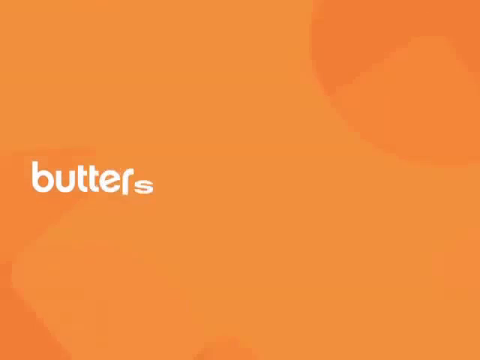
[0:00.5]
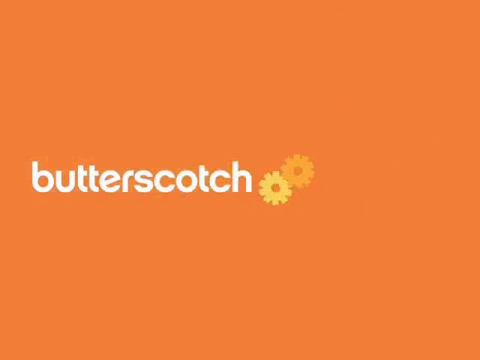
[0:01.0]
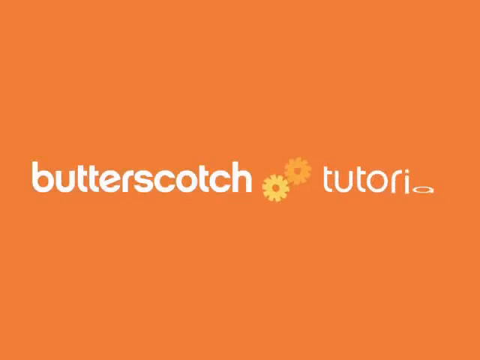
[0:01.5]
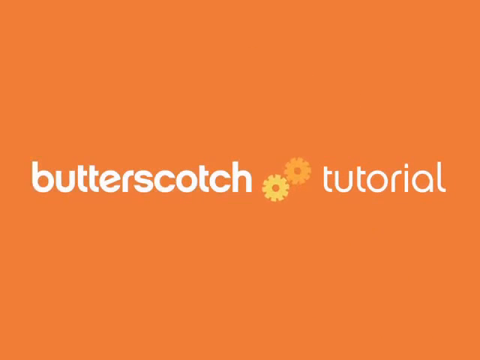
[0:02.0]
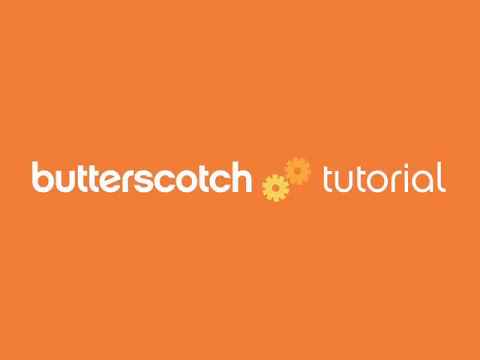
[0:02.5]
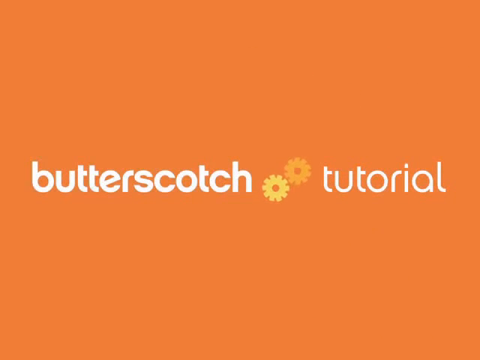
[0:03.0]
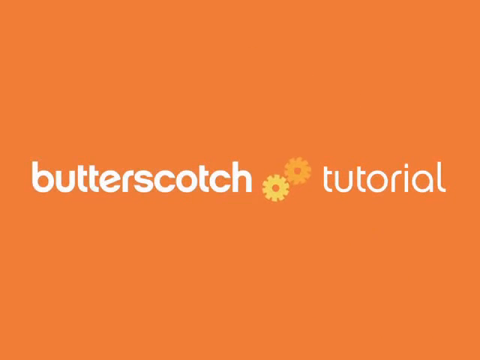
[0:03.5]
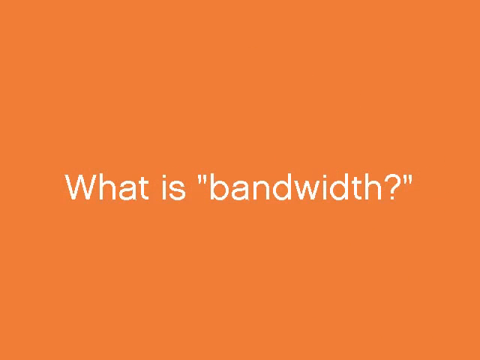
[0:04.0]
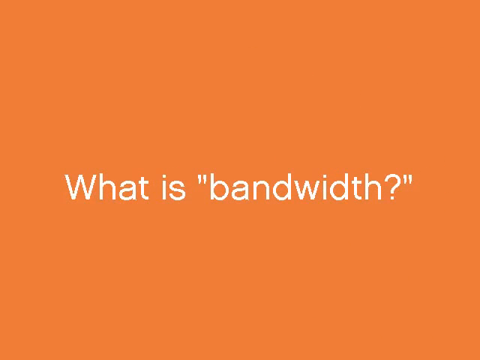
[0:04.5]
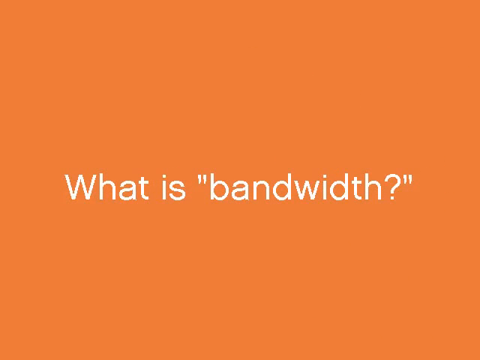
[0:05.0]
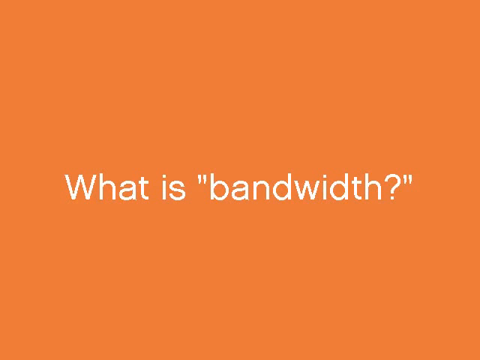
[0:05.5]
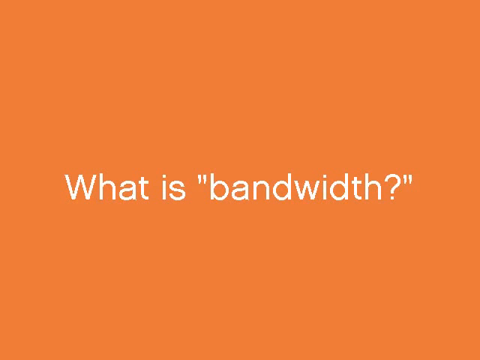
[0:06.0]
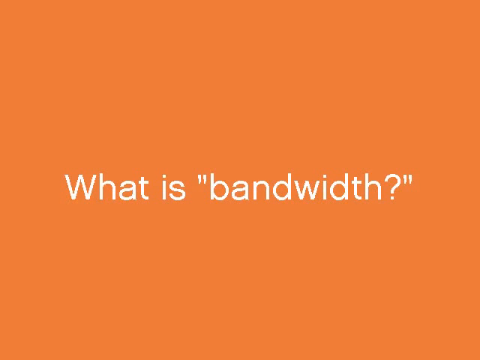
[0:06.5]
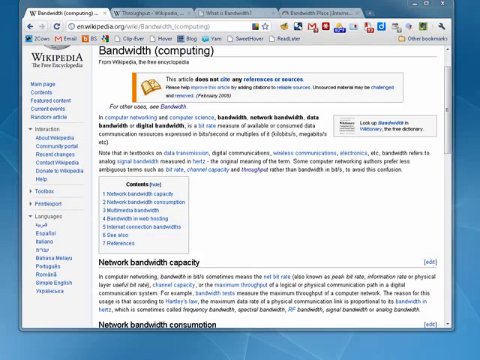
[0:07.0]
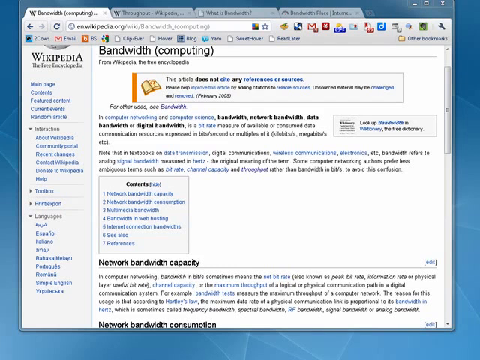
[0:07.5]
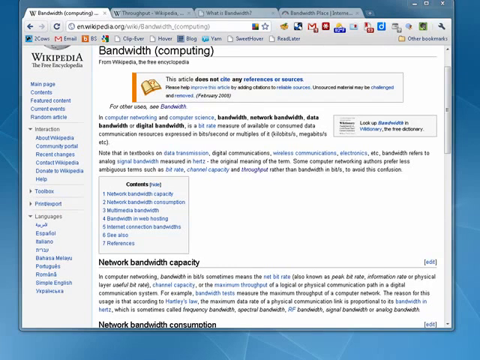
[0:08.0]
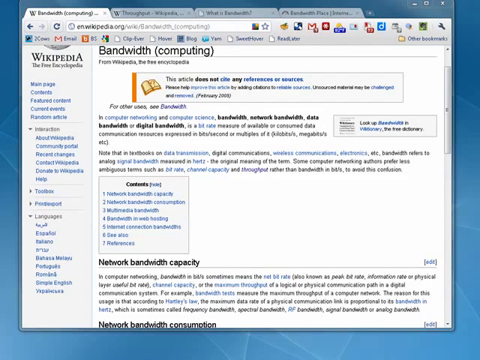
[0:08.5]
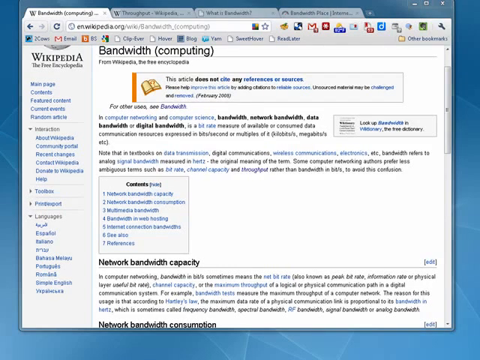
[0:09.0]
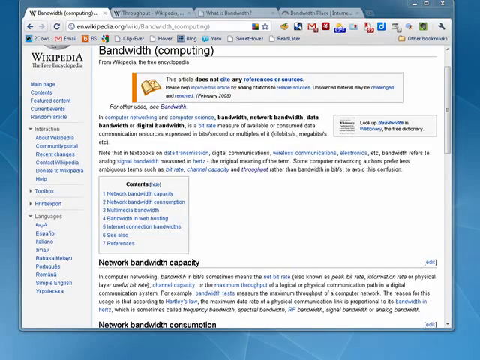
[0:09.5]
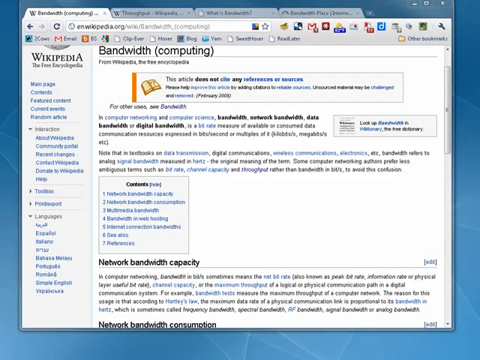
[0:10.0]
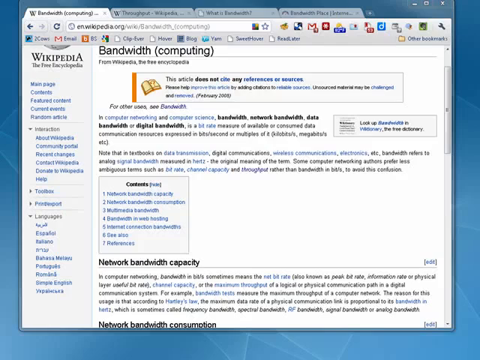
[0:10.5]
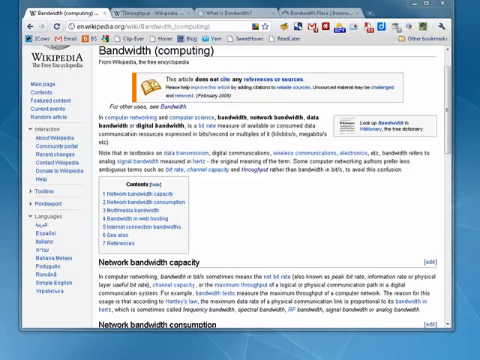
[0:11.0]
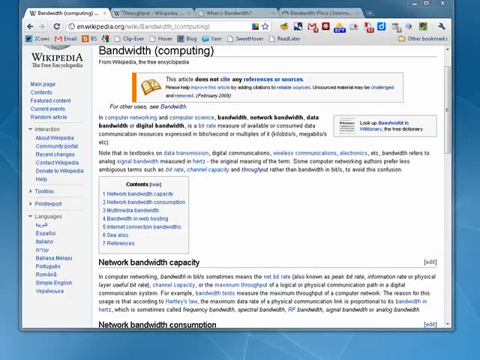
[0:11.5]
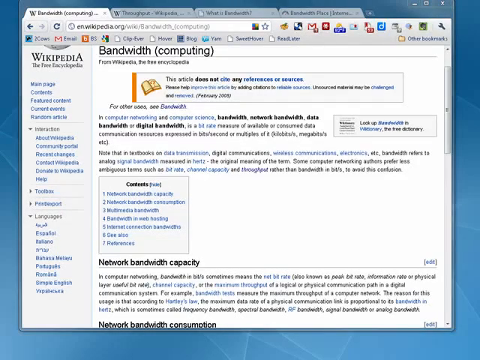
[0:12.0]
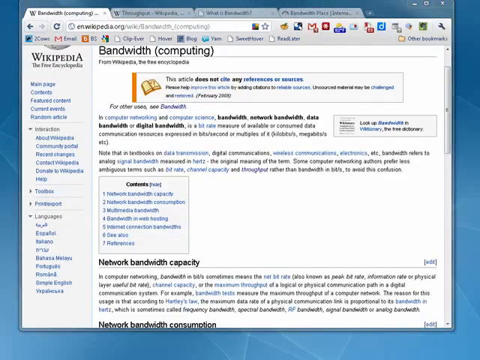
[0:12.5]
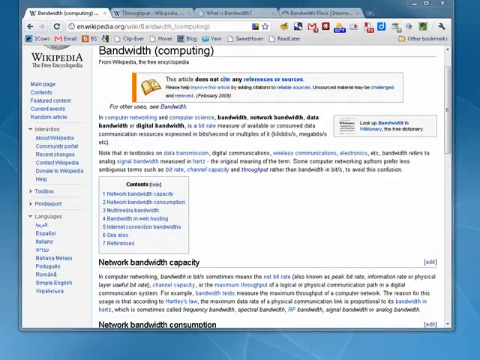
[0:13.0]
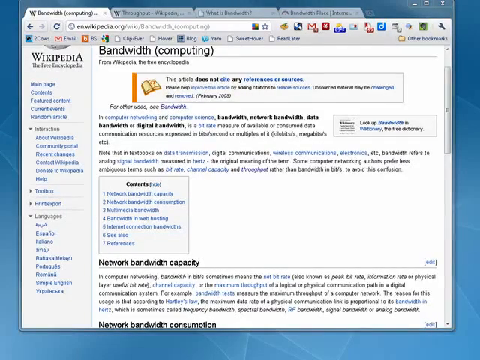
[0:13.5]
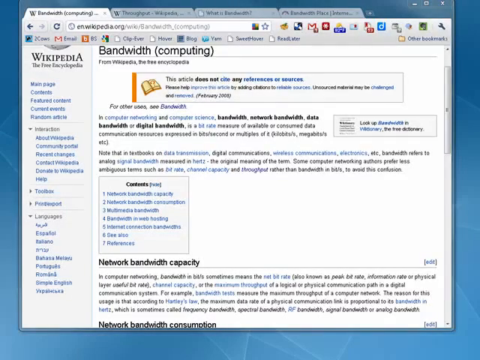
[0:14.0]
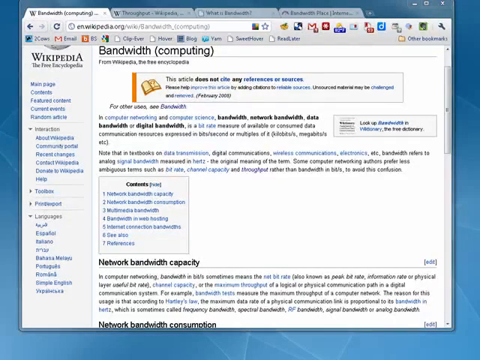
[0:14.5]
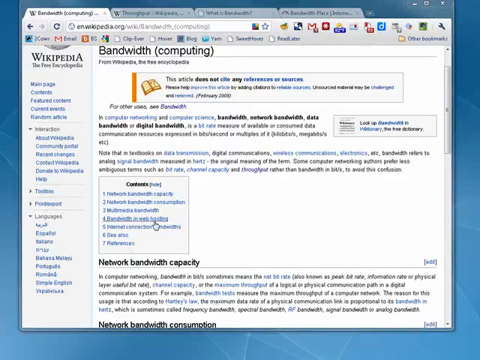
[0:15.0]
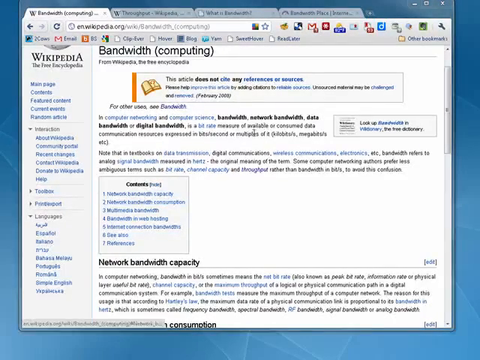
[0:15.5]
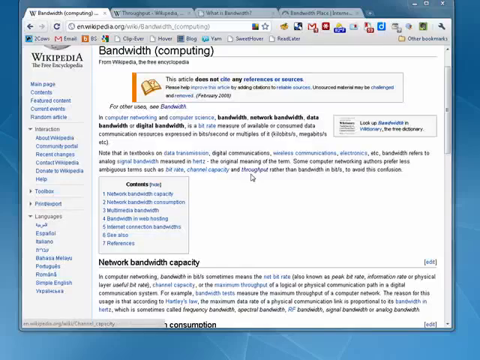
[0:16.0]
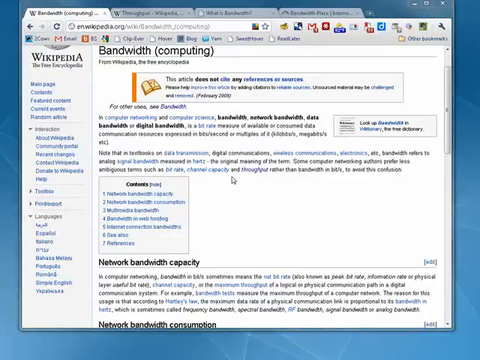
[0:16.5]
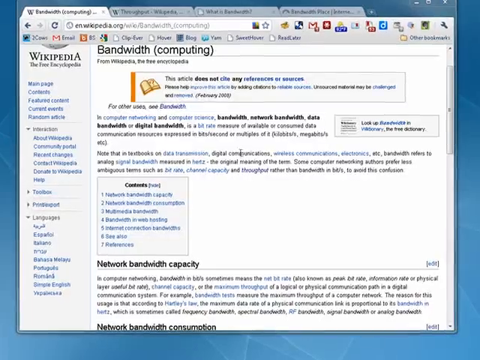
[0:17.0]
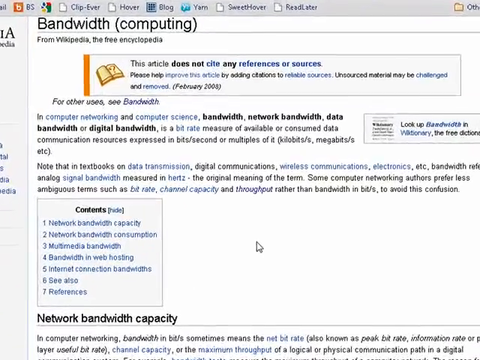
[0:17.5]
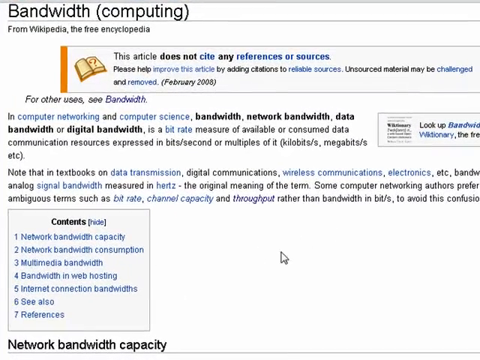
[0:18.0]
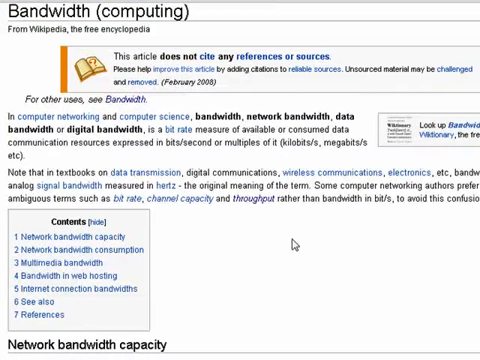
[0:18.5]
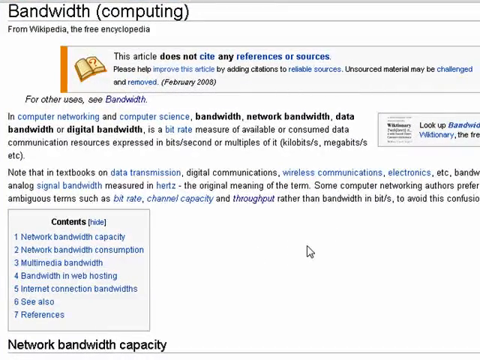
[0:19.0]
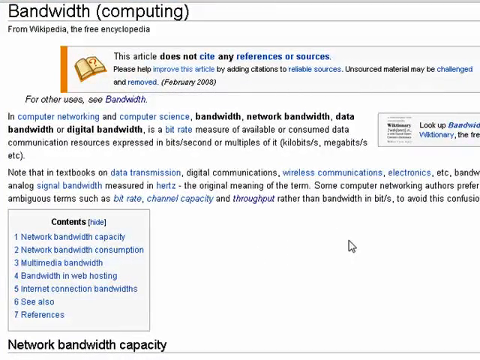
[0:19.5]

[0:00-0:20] The video begins with an all-orange background. Letters come in from the left and the right to spell "butterscotch," and two gears appear: a small yellow one, and up to the right of it a small orange one. Next comes the word "tutorial," and the gear spins slightly. That goes off the screen, and the text "what is bandwidth" appears. The video then cuts to what looks like a laptop screen with four tabs across the top; the first is open to the Wikipedia page for bandwidth. The cursor comes in, clicks on a link, and the view zooms in a little as the cursor moves slightly to the right, showing more information and some links about bandwidth. Across the top are various bookmarks, including ones for email.